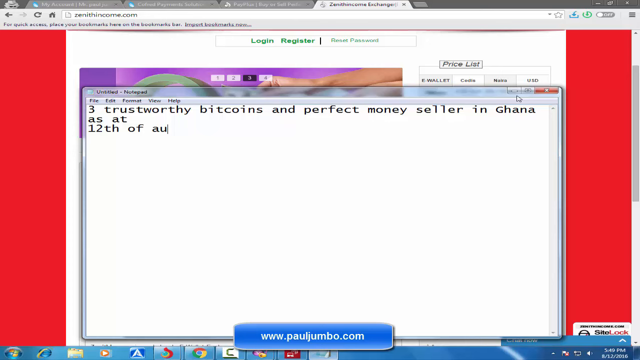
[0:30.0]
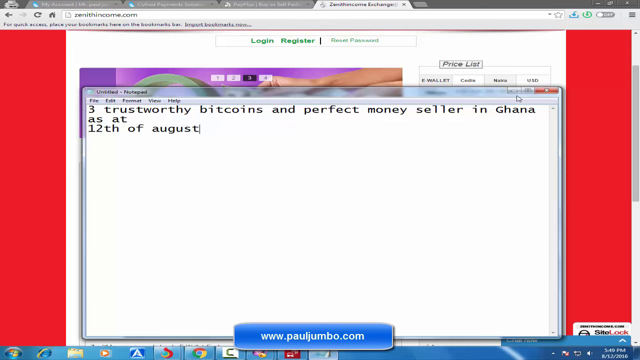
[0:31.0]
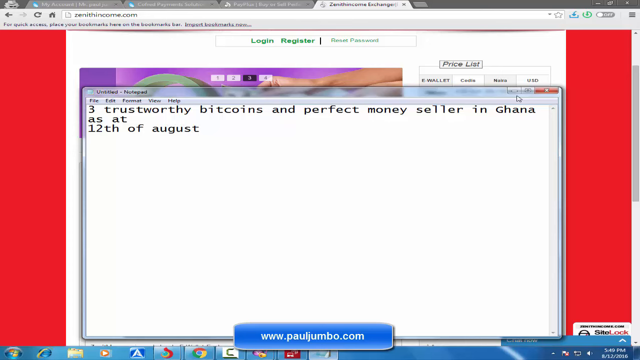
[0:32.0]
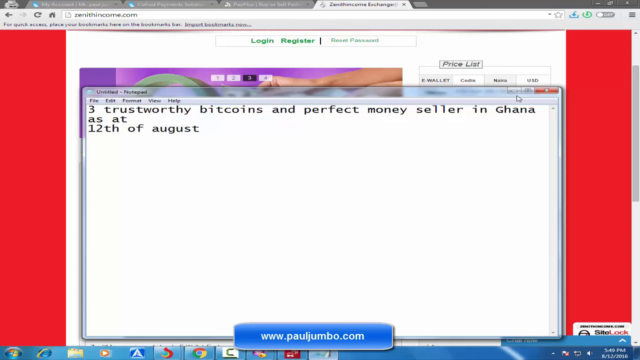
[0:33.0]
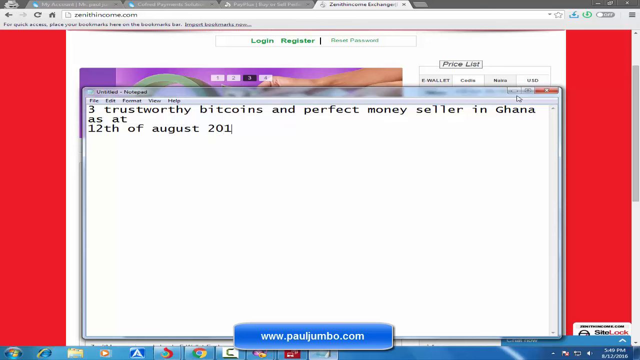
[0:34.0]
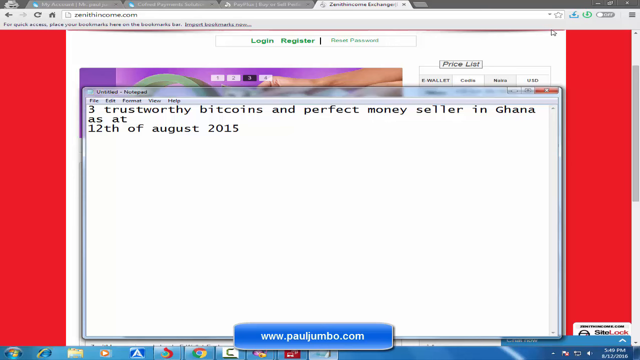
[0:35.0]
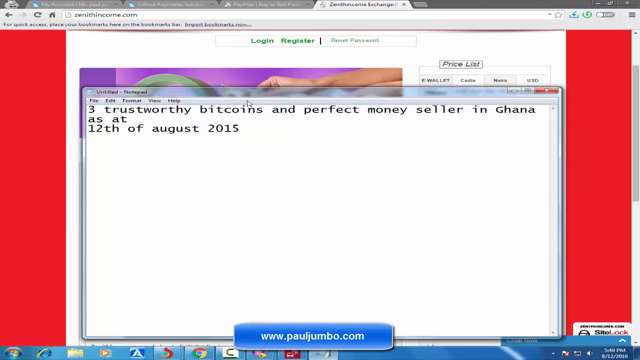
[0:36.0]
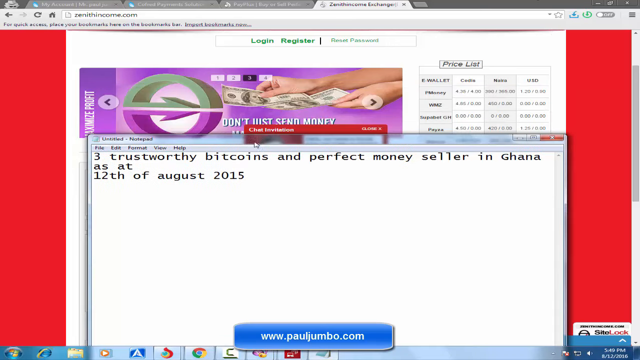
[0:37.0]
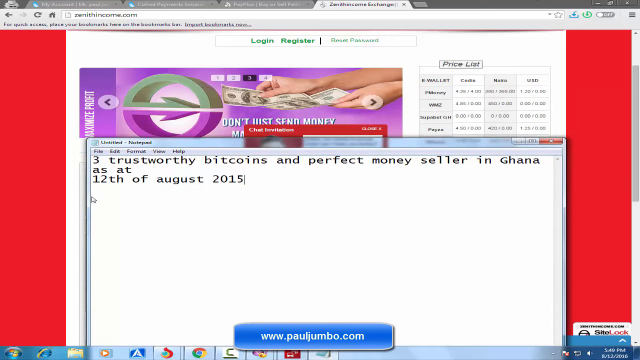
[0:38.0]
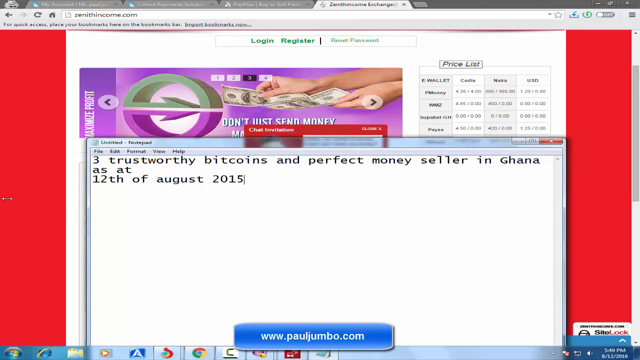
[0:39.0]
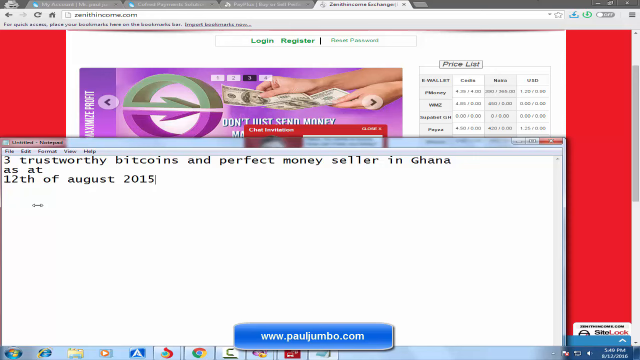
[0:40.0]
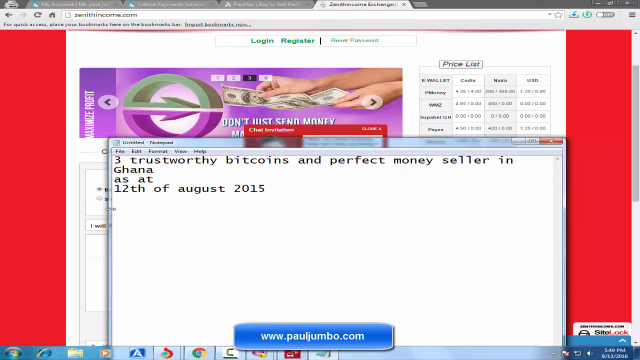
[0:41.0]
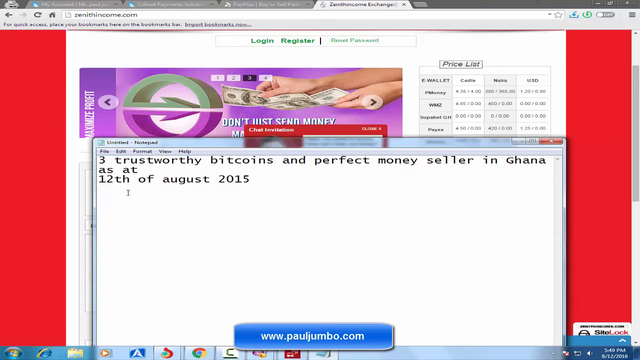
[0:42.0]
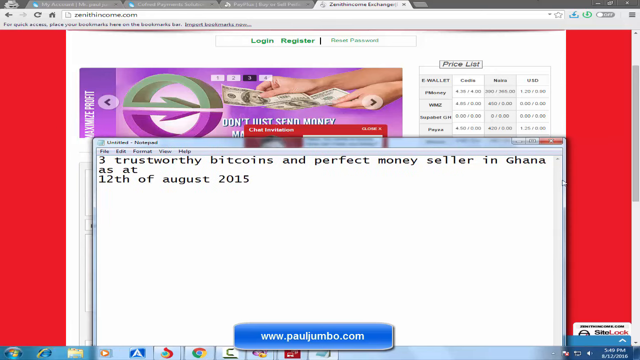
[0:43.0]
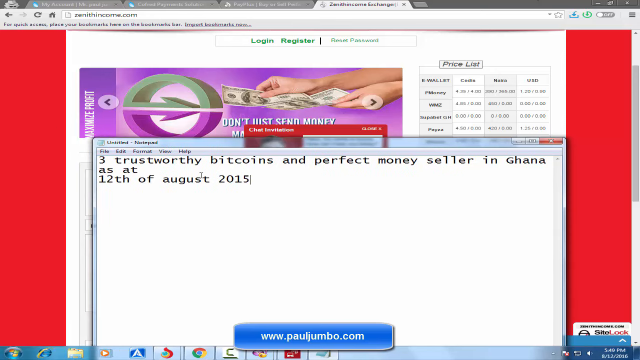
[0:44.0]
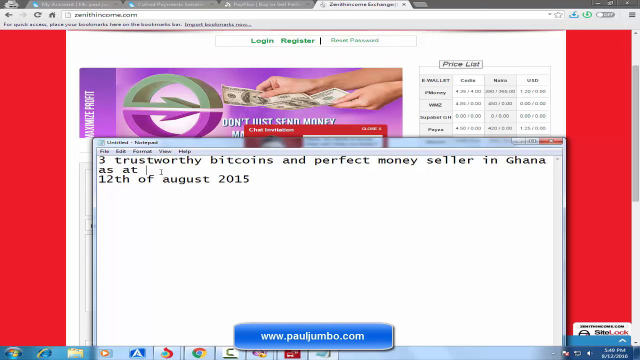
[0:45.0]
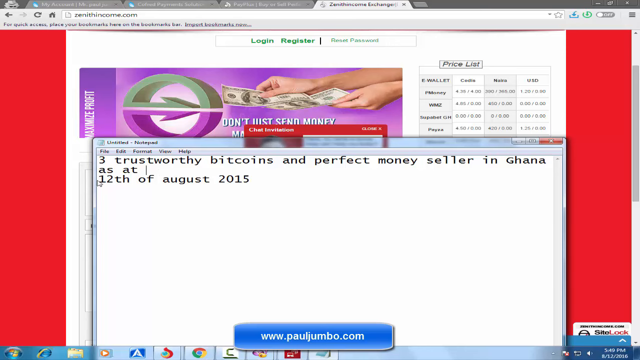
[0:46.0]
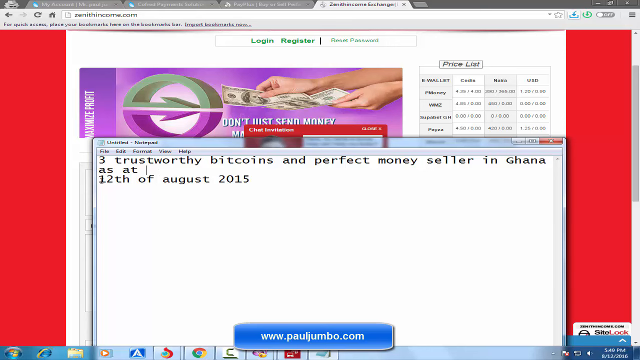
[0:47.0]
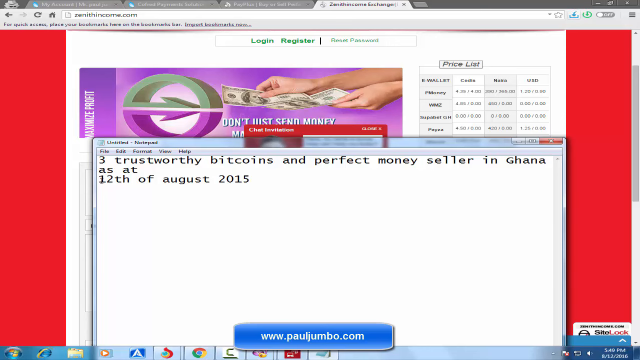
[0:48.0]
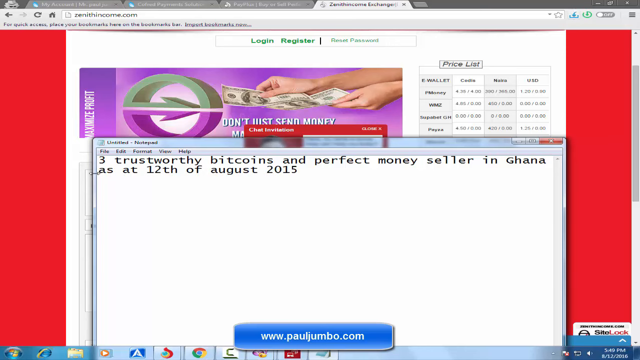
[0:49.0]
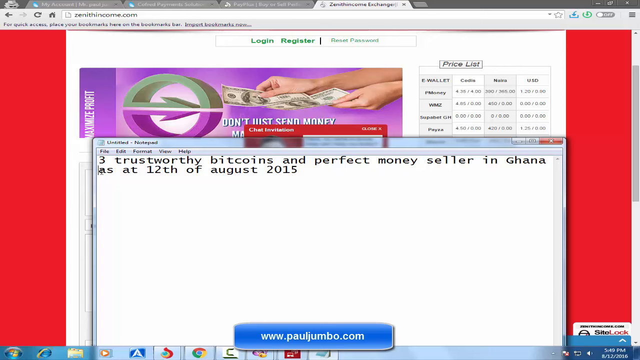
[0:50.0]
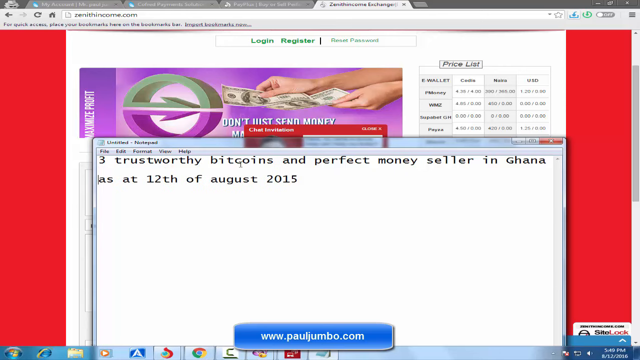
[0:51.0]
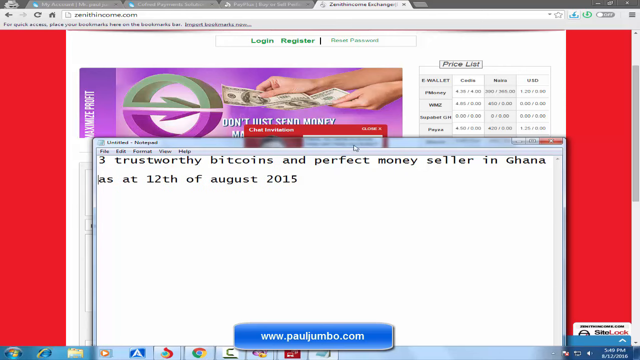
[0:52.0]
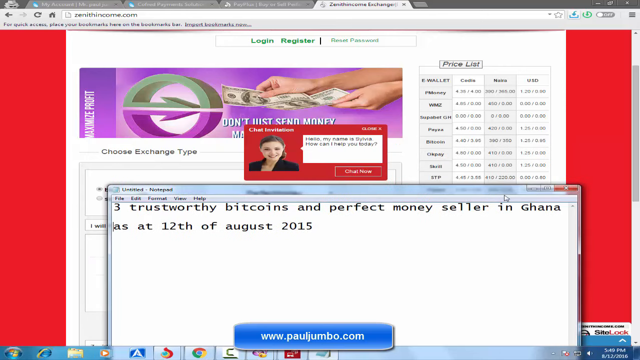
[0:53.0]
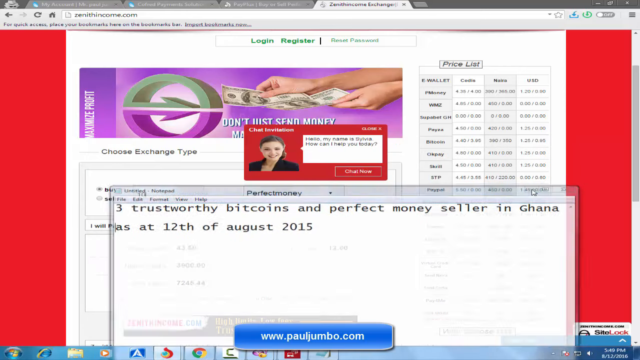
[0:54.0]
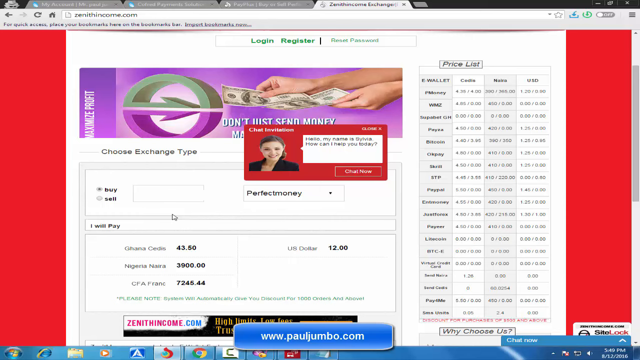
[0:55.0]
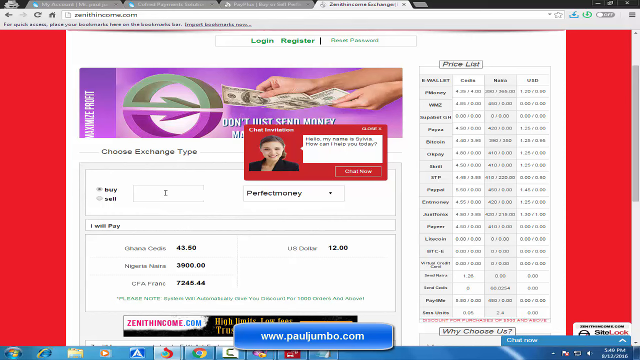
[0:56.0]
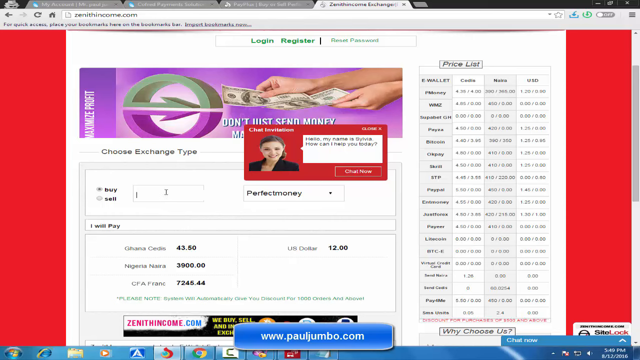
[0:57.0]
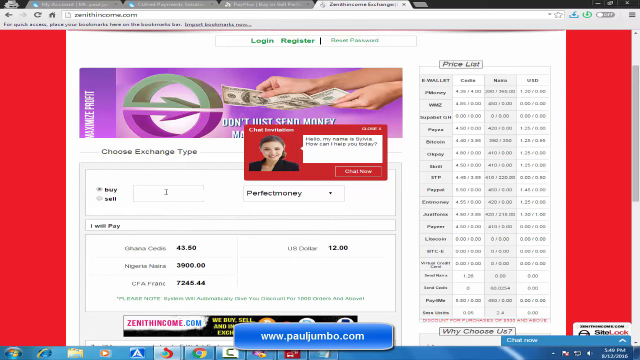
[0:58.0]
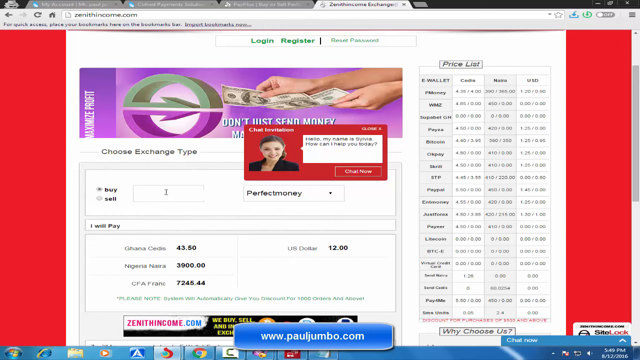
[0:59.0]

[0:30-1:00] On the computer screen, the title "Three Trustworthy Bitcoins and Perfect Money Seller in Ghana" is being typed. Meanwhile the size of the view is adjusted: at one point it is pulled down quite far, to a fourth of an inch from the bottom, and then pushed back up. An icon appears with a green half circle at the top ending in a triangular arrow tip pointing right and a purple half circle at the bottom with a triangular arrow tip pointing right; the two meet each other. A smaller picture of a woman is superimposed. The screen says "don't trust, send money", and hands hold out money, three bills, reaching toward the half circles with the arrows. The woman in the picture is smiling, small, on a rust-colored background. To the right is a price list with four columns in different shadings, the woman in her box is on the left, and below that are multiple sections in green.